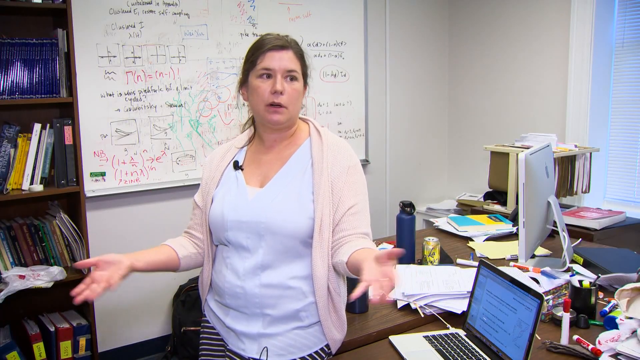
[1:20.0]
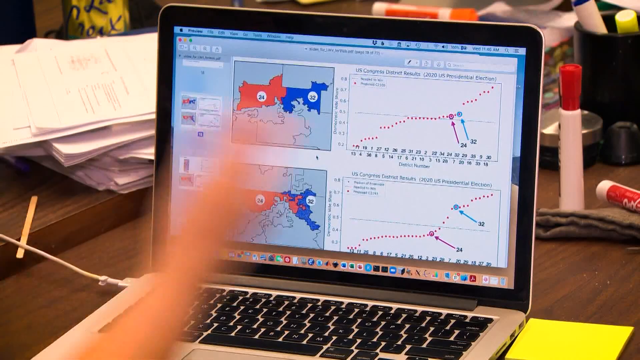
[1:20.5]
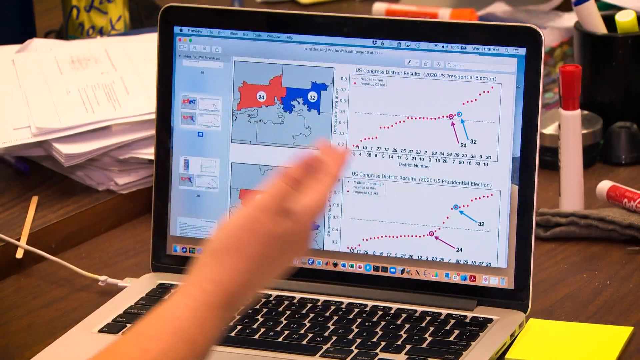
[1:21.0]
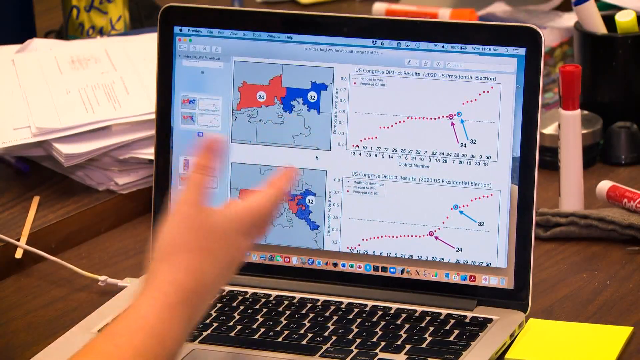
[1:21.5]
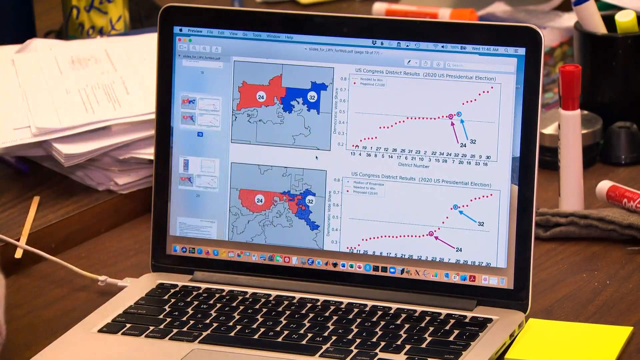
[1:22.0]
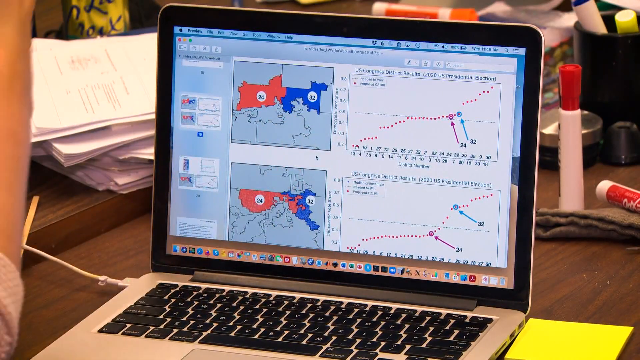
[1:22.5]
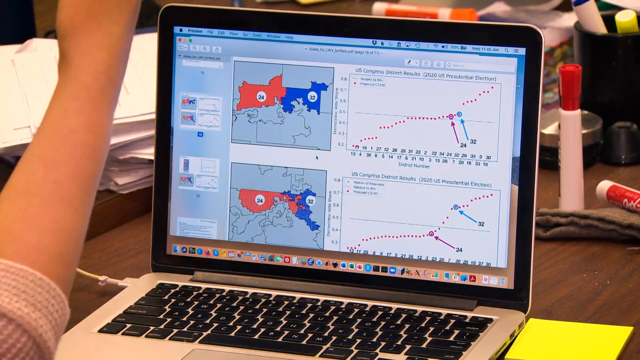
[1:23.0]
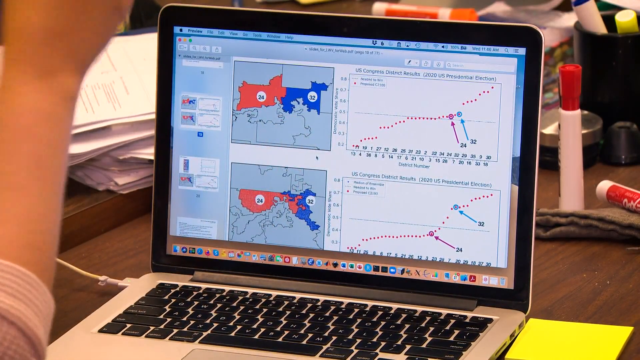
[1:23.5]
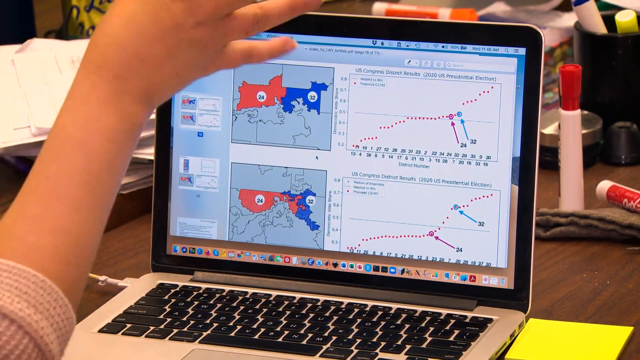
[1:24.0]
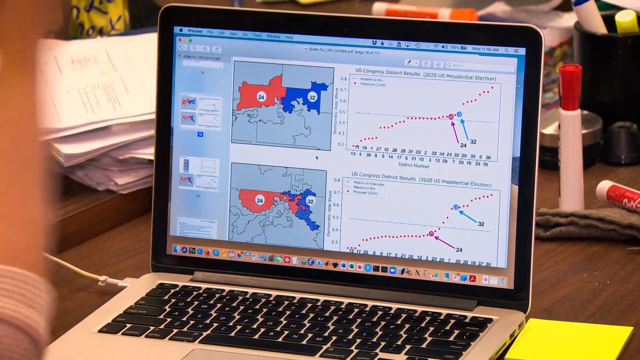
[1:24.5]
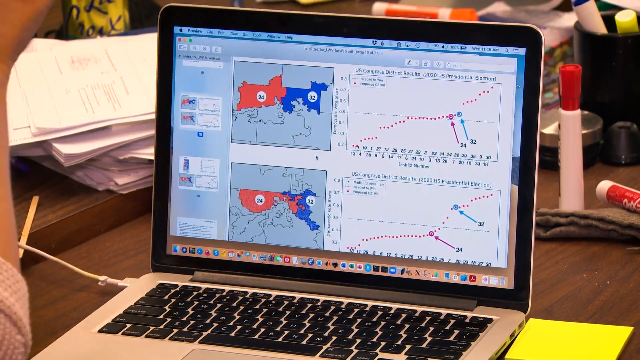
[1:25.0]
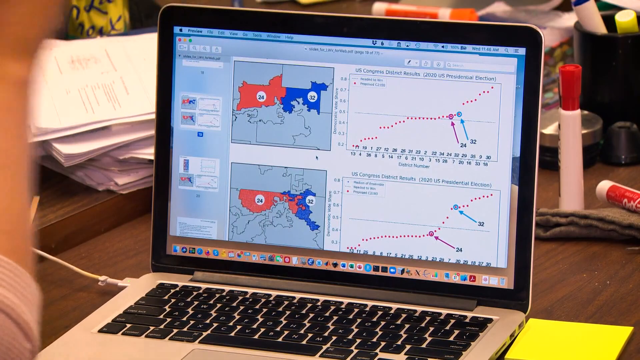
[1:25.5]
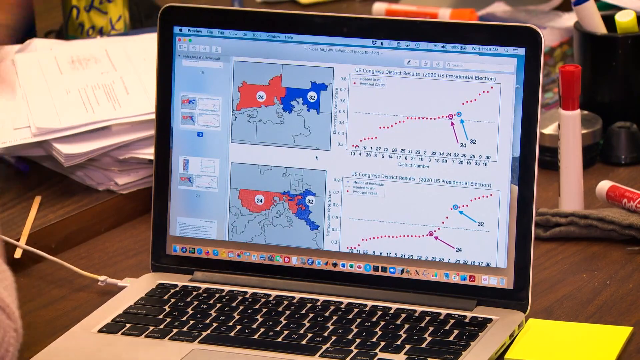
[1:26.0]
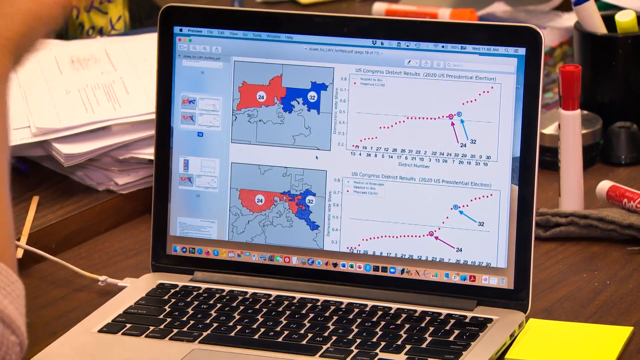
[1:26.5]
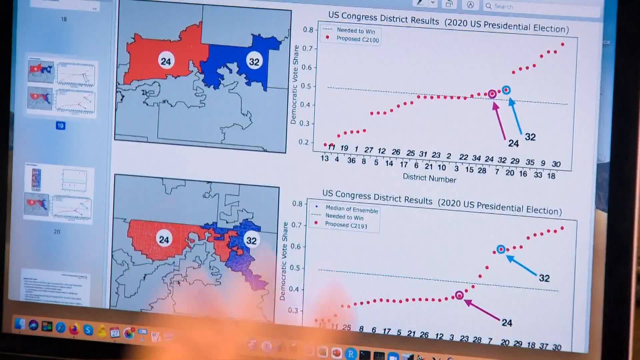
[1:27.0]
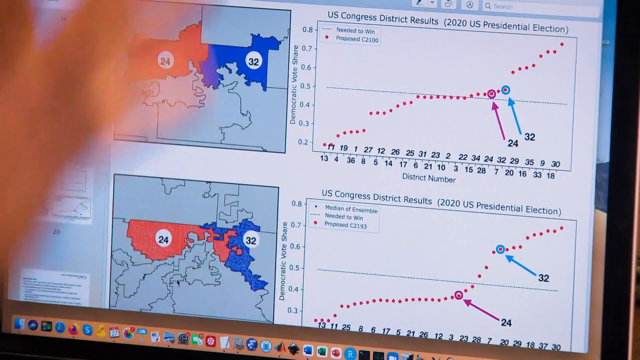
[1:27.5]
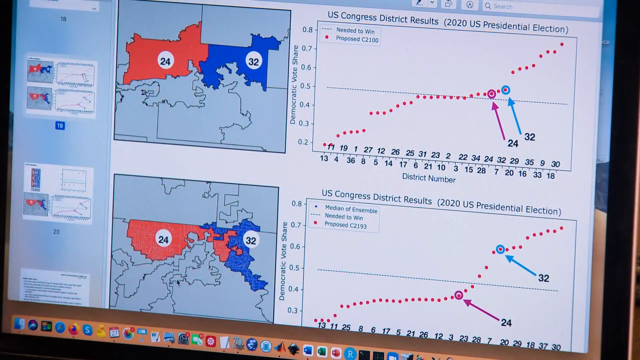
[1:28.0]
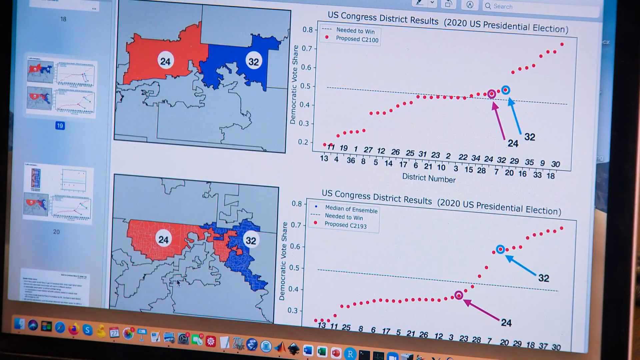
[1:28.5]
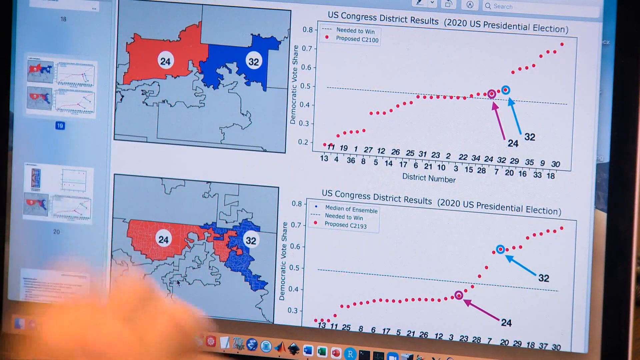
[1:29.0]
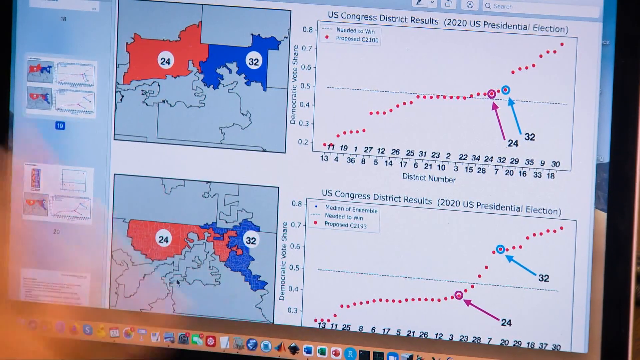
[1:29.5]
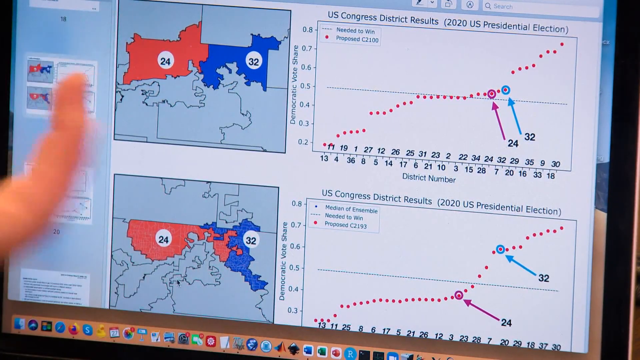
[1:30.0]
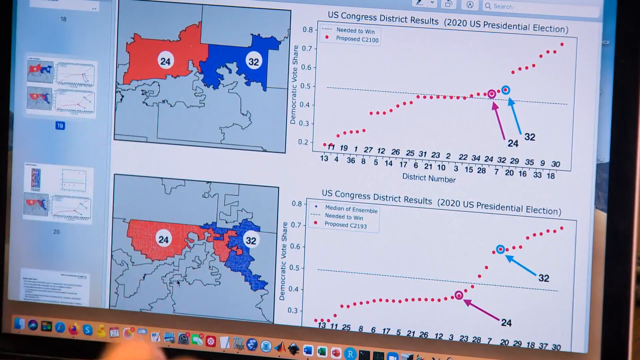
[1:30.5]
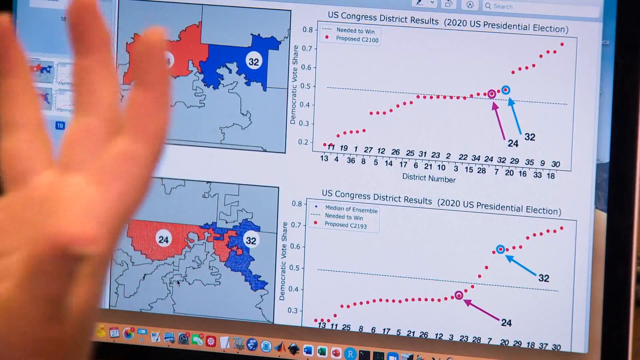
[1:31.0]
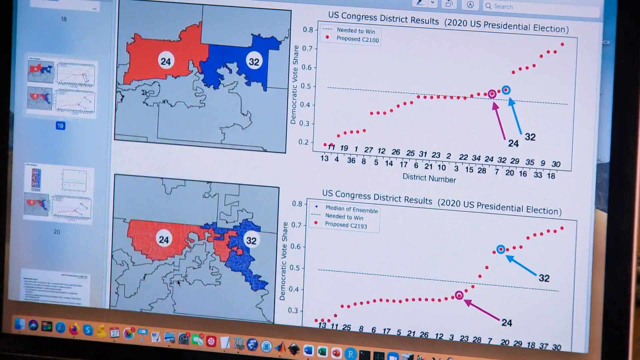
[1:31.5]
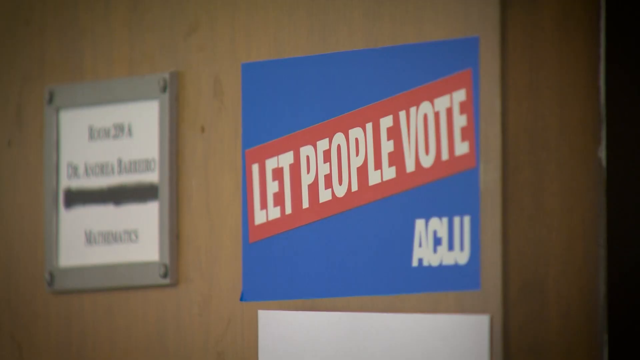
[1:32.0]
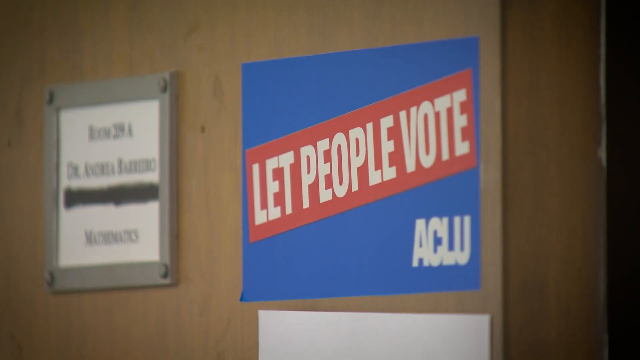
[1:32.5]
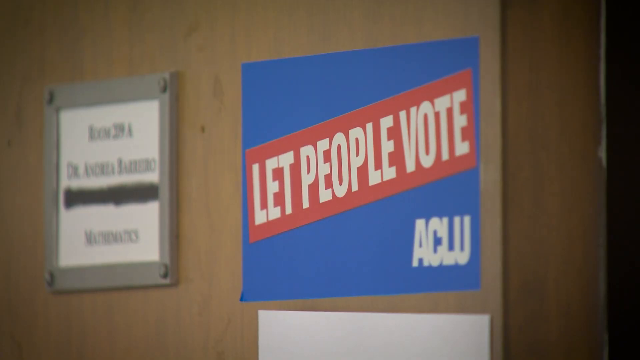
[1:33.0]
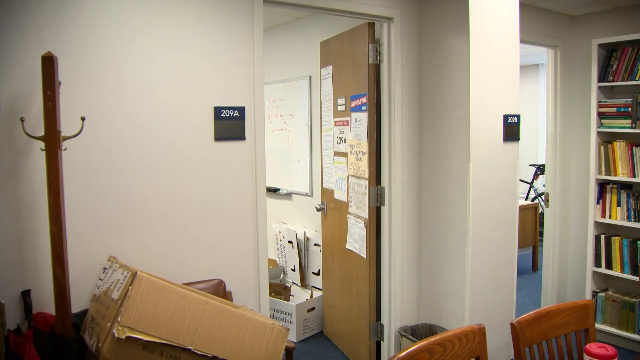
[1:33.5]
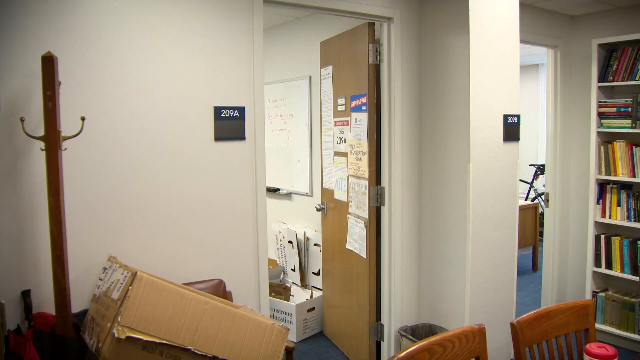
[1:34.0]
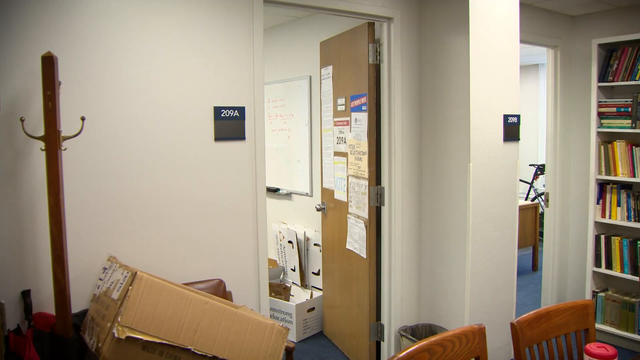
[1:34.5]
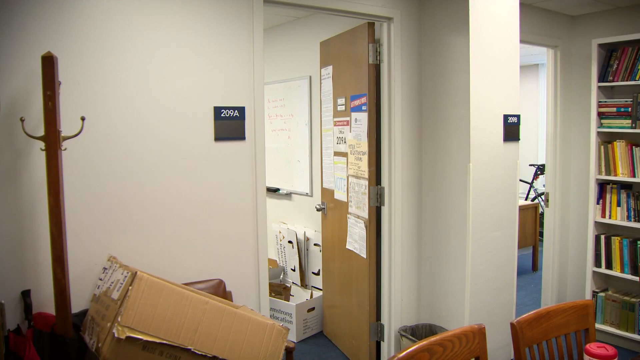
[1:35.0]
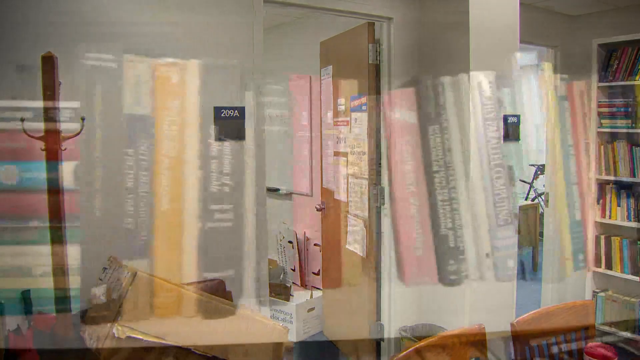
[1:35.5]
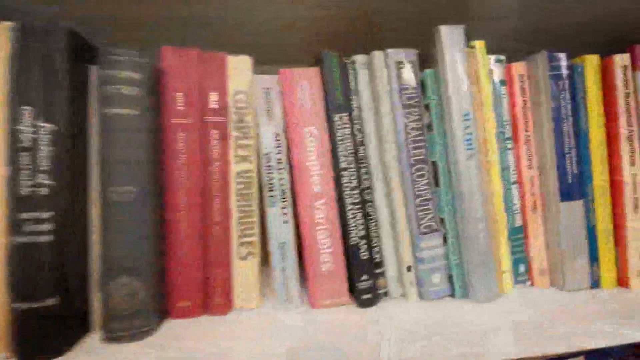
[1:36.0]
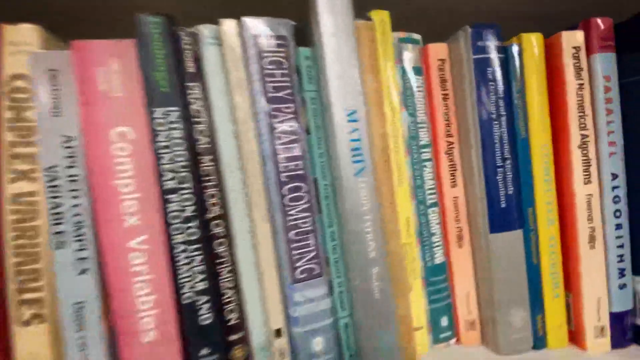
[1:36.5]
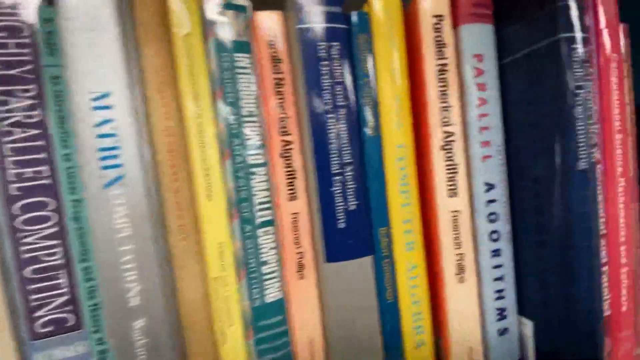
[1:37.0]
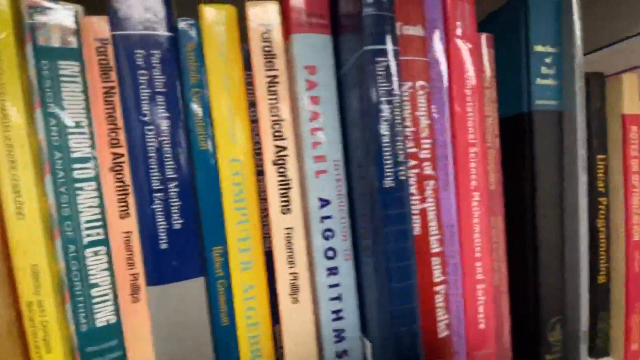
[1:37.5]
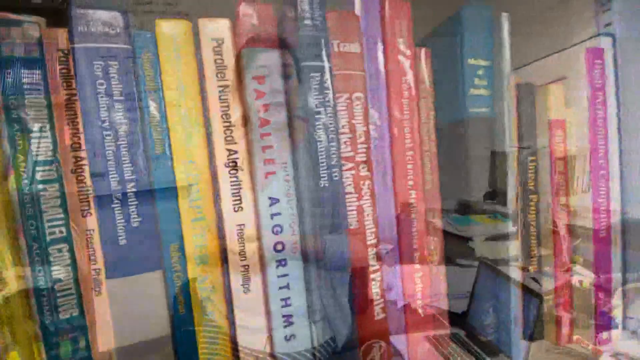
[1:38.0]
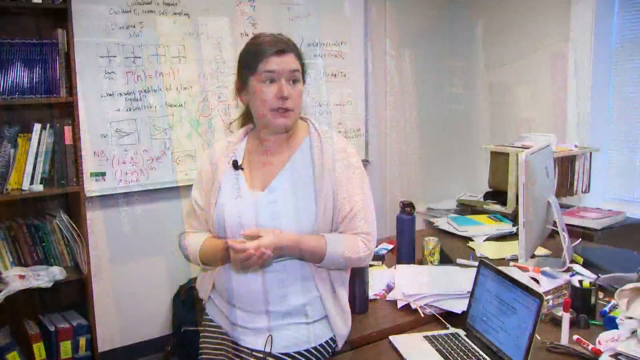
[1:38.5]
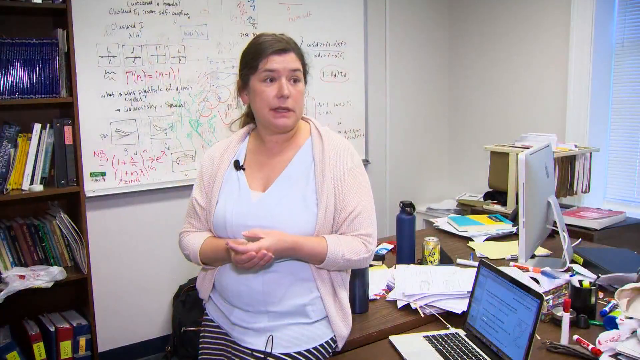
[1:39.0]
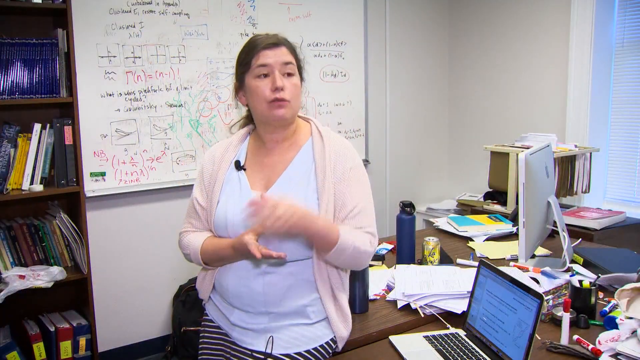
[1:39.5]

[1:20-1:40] The teacher is at the computer again, being interviewed and showing the reporter things on her computer. She gestures with her hands, and the camera zooms into her computer screen, which shows the graphs and county-level maps seen earlier. The door to her room is shown with the words "let the people vote." She then stands in front of a whiteboard full of red and green ink. An exterior shot shows two offices or office doors, both open, suggesting she may be a college politics professor.